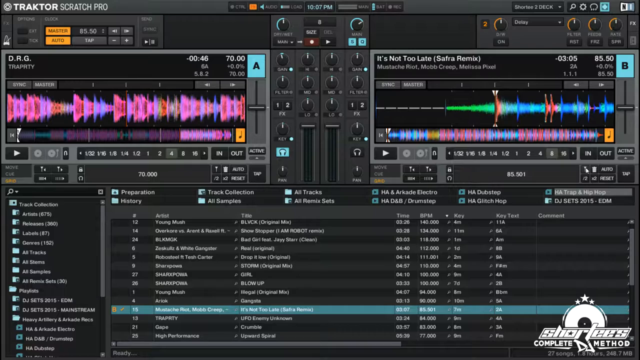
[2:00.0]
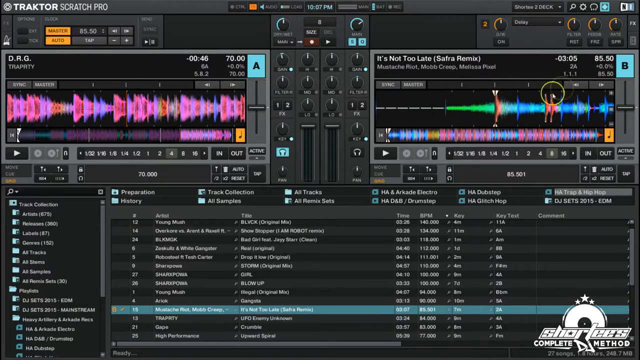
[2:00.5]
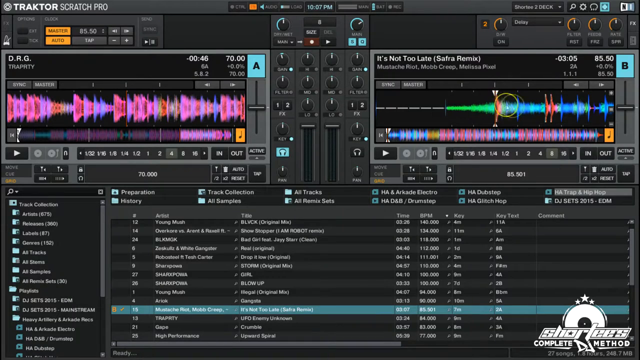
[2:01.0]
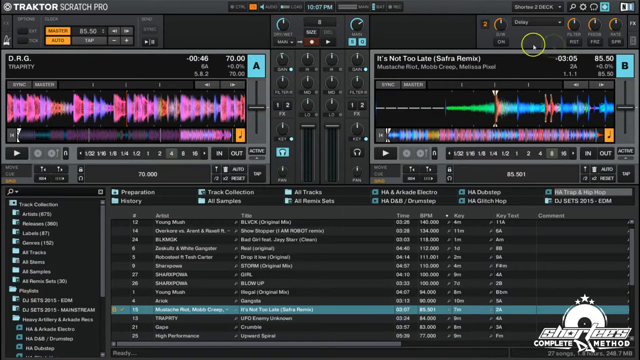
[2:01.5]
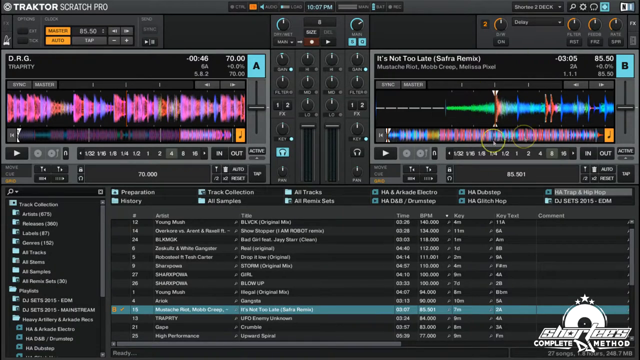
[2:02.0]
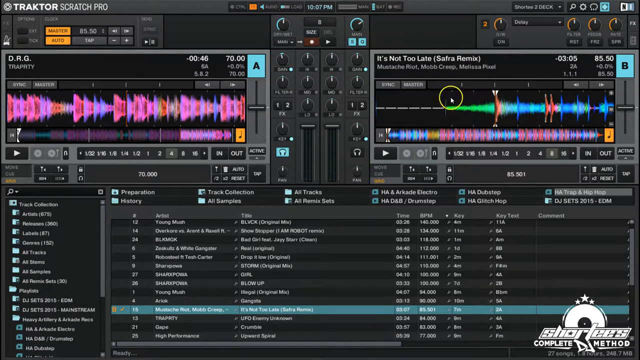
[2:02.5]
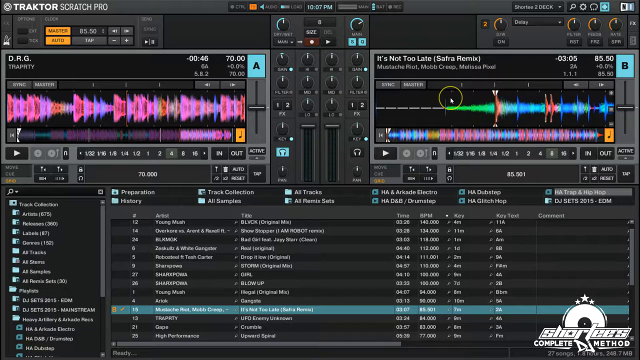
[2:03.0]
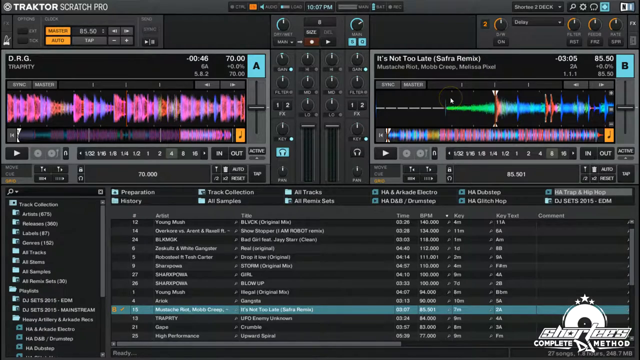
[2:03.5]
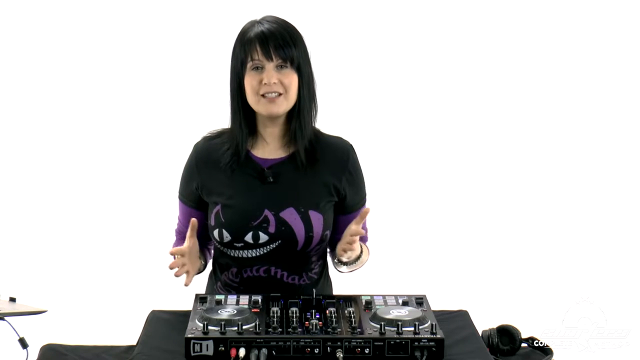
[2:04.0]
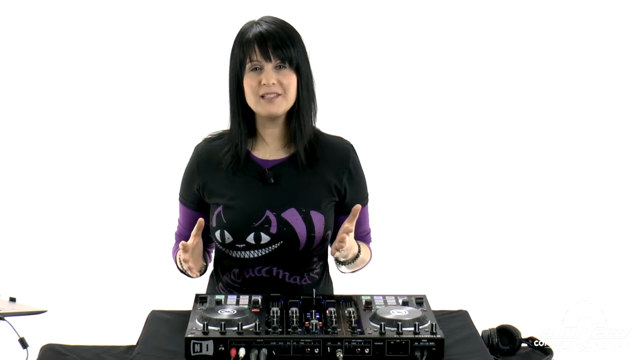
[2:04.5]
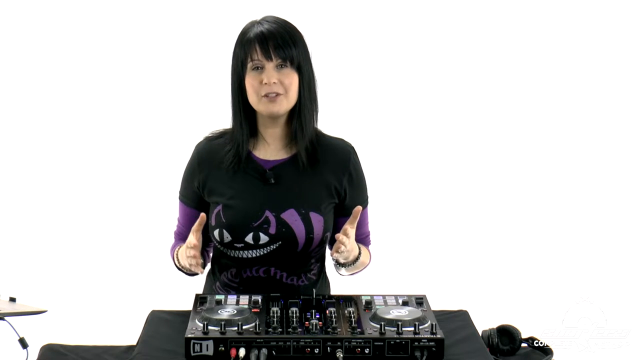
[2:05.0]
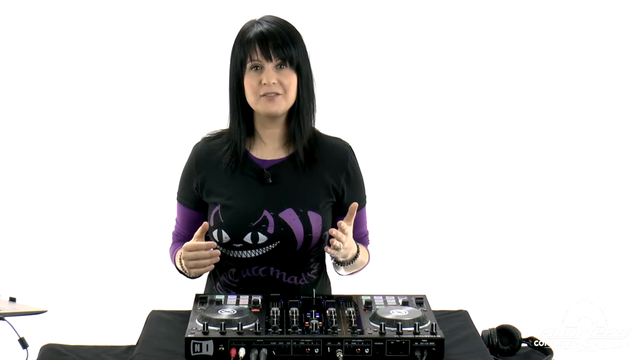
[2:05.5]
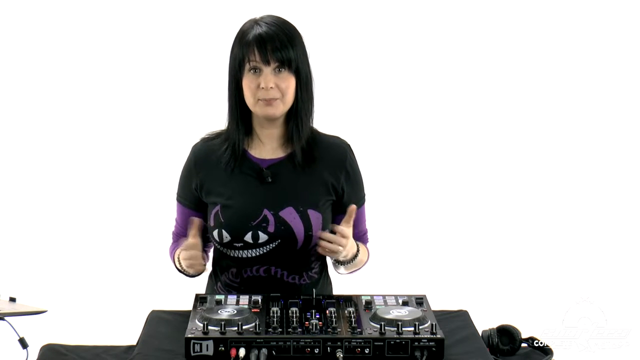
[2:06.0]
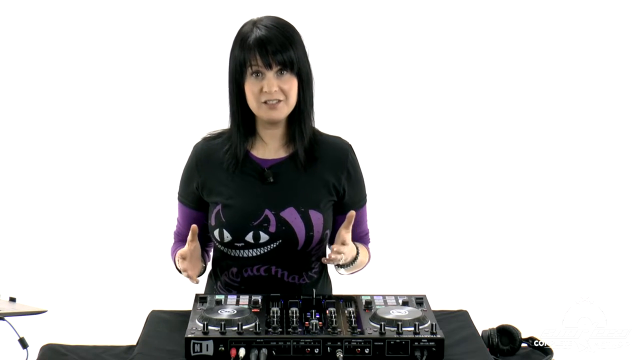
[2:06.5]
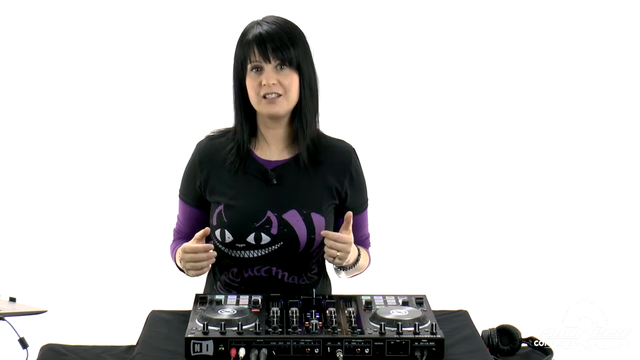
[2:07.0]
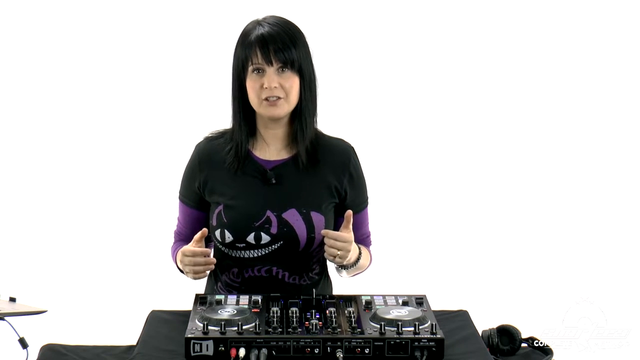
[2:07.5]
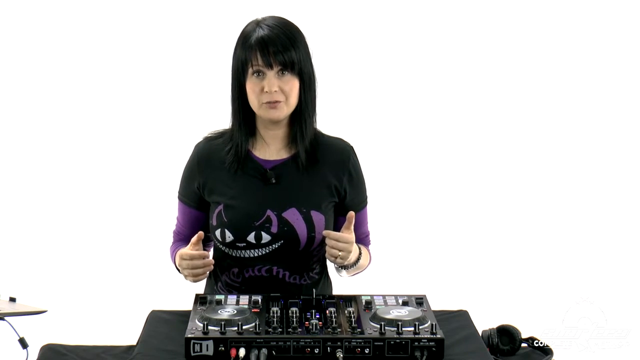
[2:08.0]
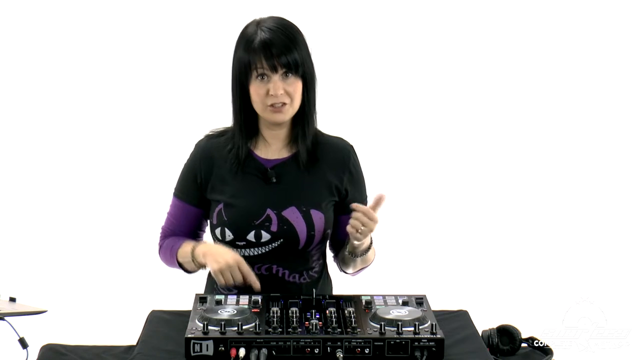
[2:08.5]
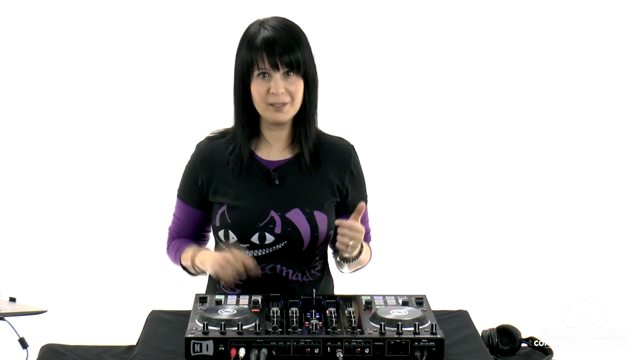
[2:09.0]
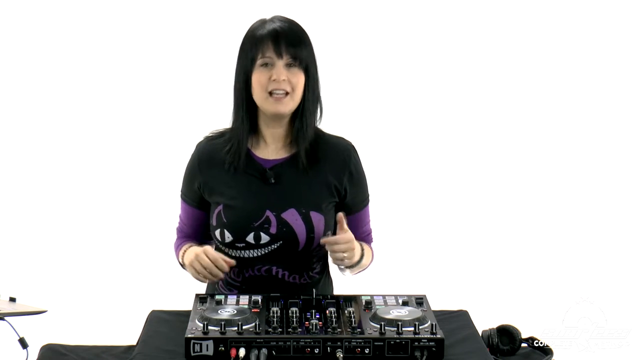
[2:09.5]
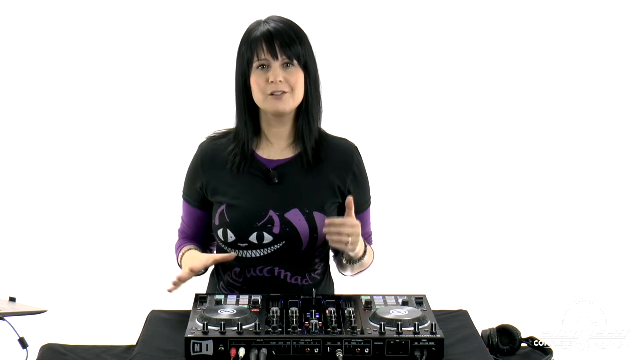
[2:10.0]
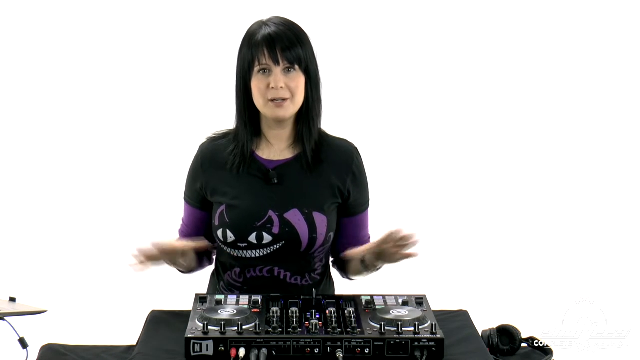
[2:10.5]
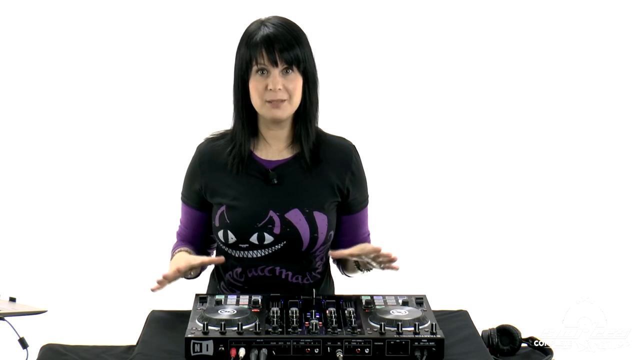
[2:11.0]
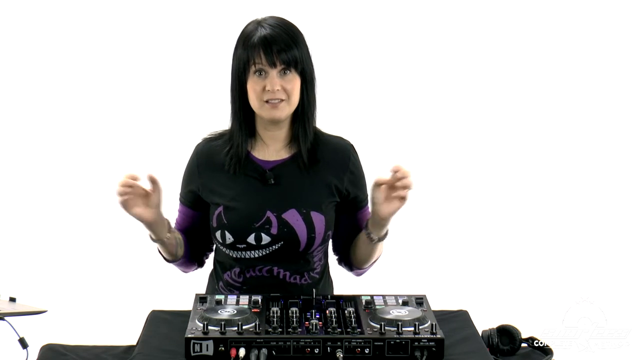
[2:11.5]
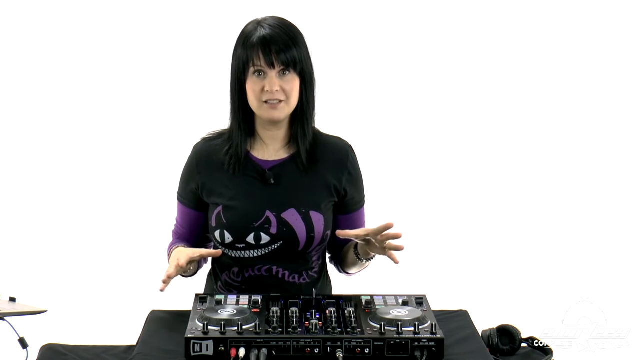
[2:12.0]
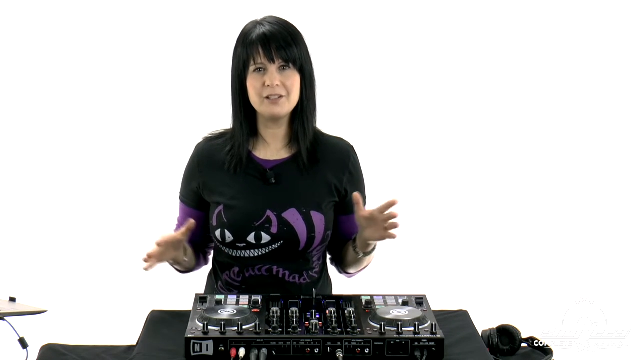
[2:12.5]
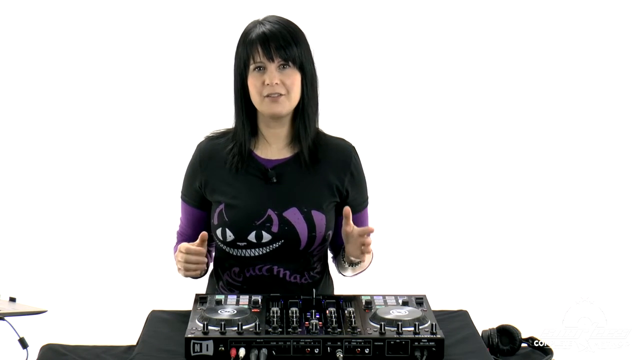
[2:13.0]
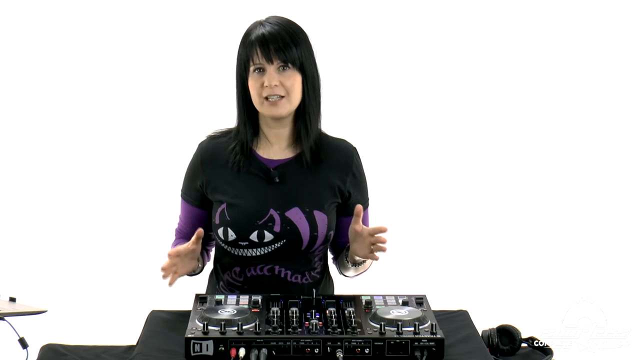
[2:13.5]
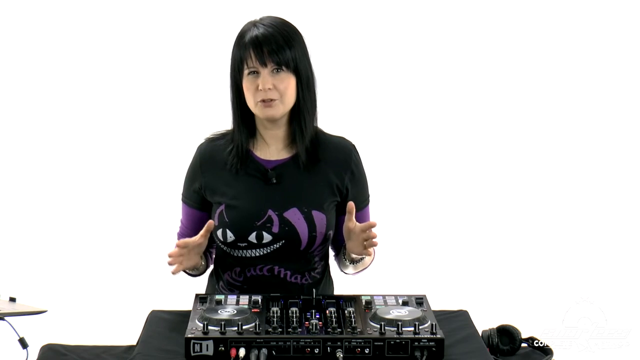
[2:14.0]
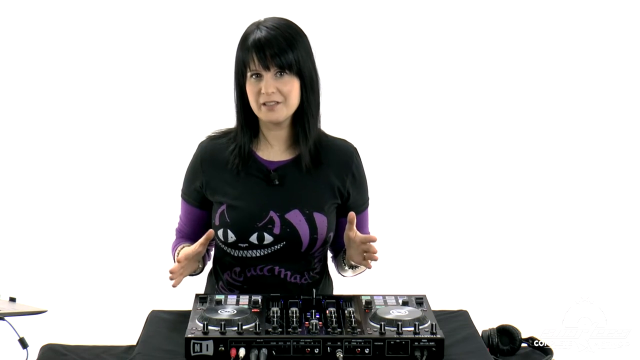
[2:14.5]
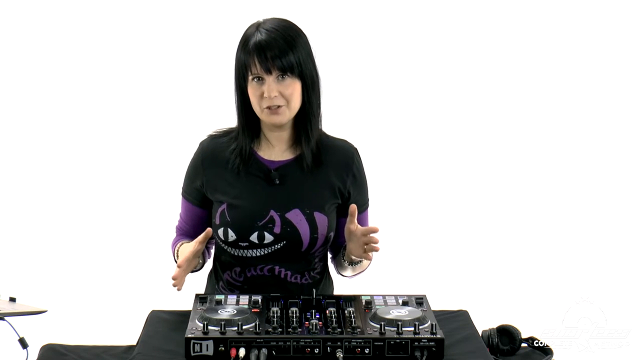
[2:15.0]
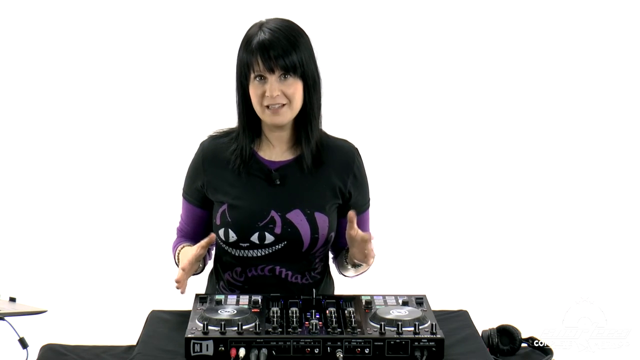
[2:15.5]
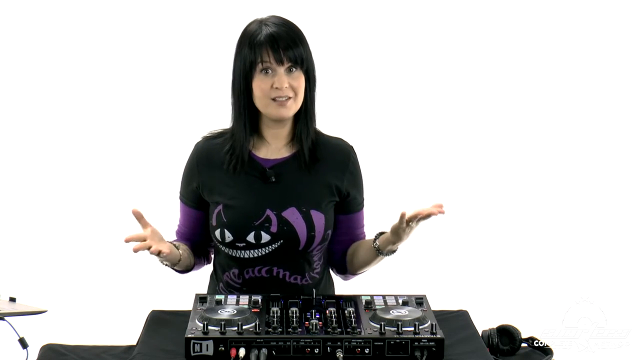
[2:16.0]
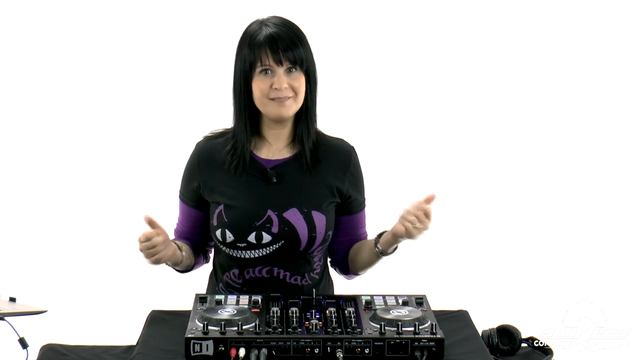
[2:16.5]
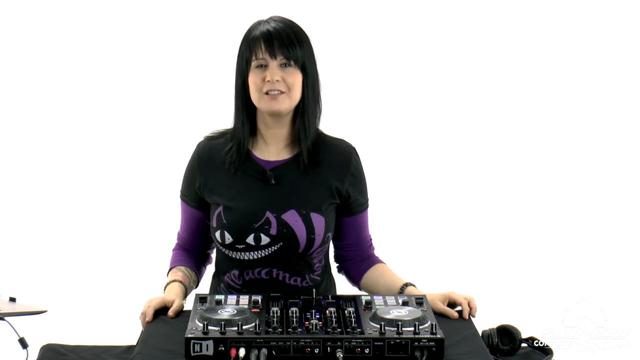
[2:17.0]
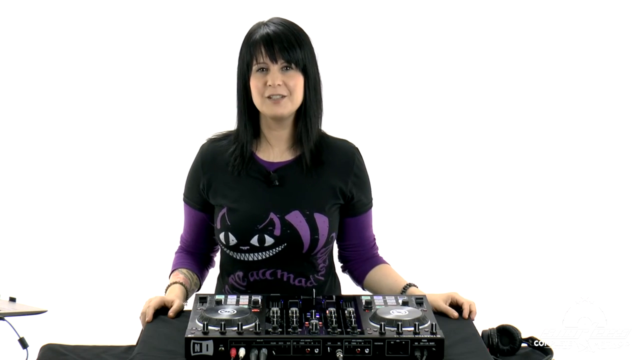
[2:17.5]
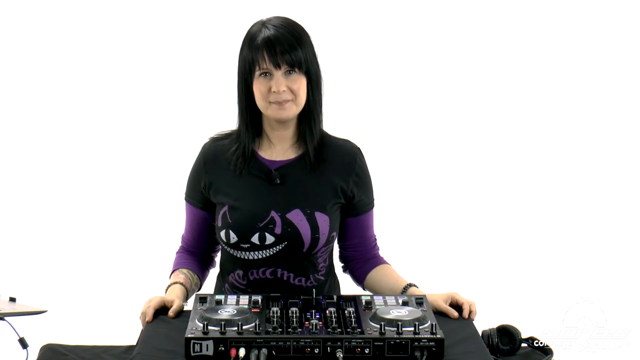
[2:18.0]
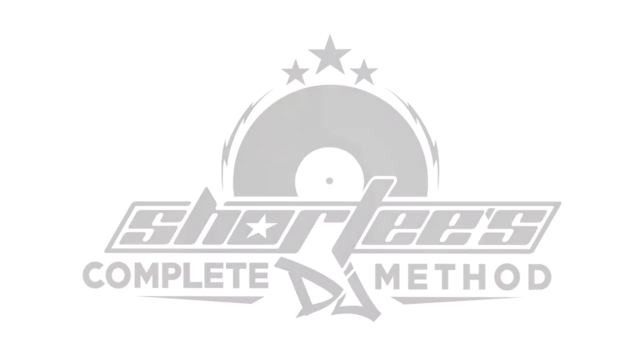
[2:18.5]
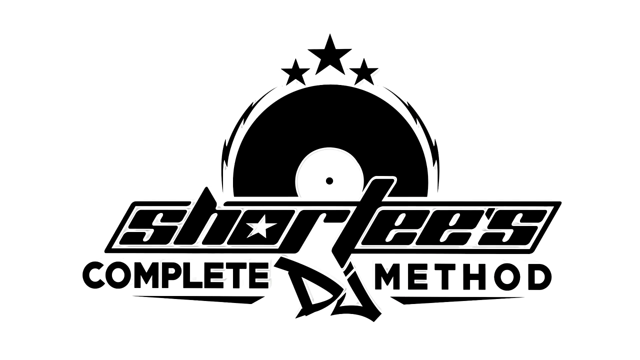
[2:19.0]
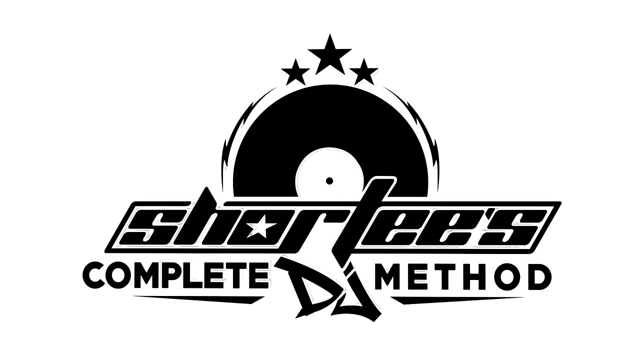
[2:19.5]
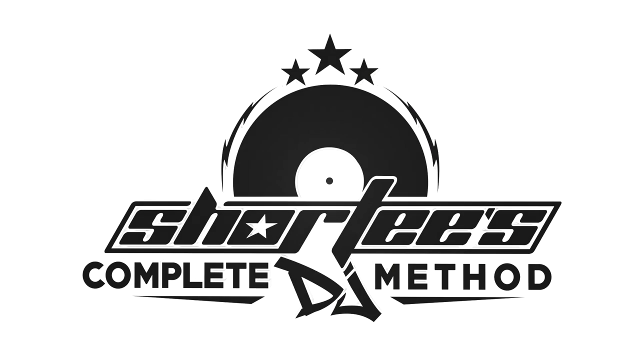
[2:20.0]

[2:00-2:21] The "Traktor Scratch Pro" mixing board is still shown. Most prominent are two boxes opposite each other that measure sound waves, frequency, pitch and tone; they are multicolored and shaped from left to right. Above one box is "DRG"; above the other are the name of the song being played and its time position in the song.